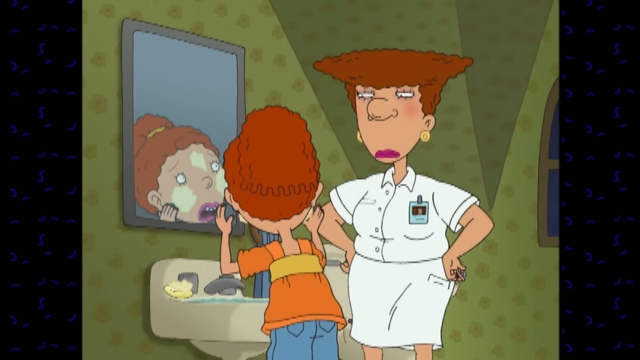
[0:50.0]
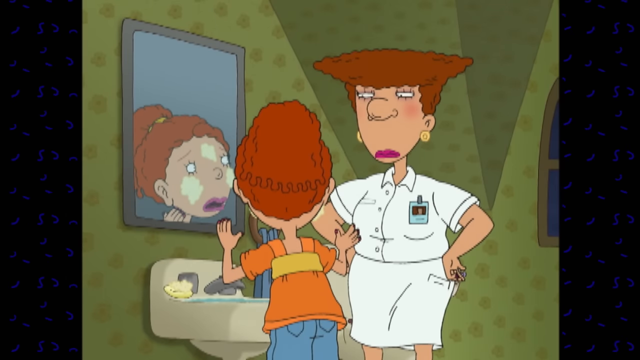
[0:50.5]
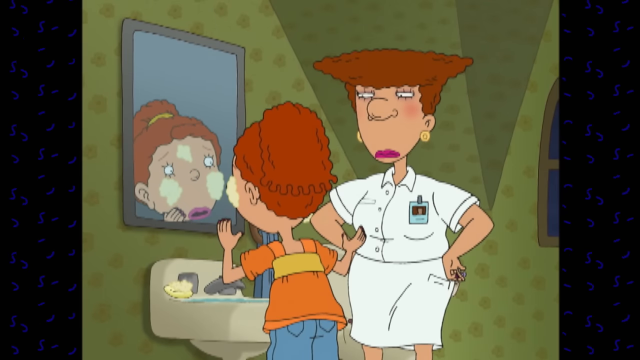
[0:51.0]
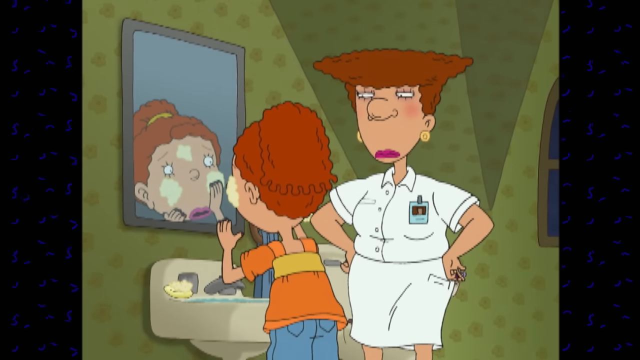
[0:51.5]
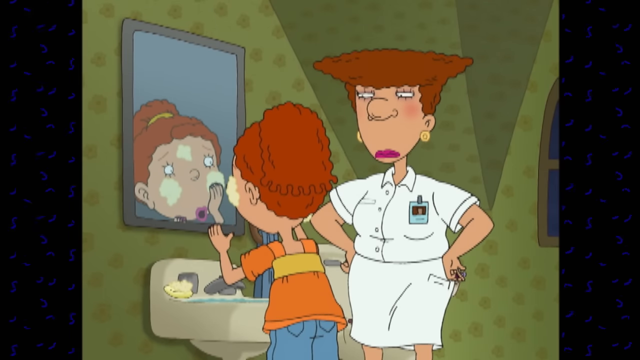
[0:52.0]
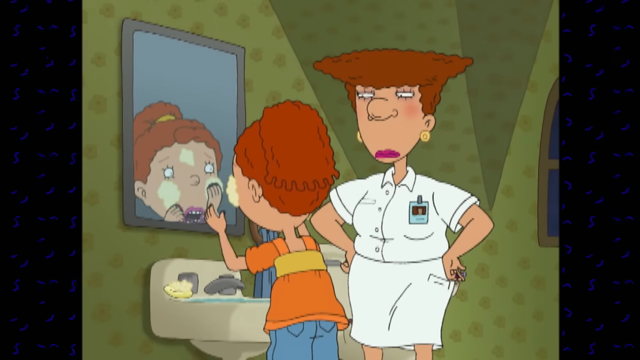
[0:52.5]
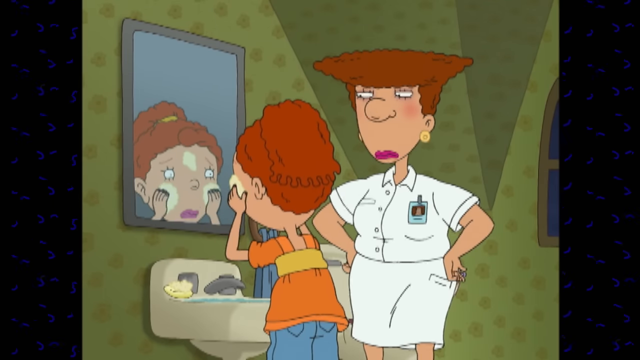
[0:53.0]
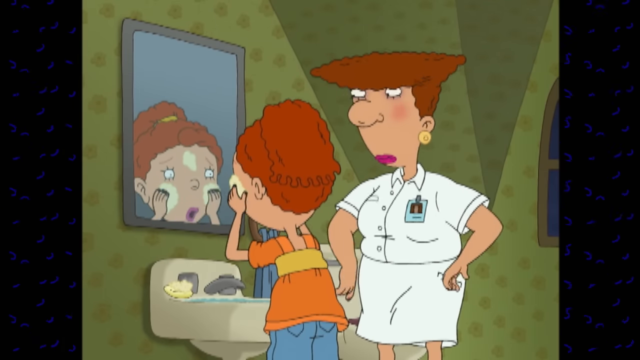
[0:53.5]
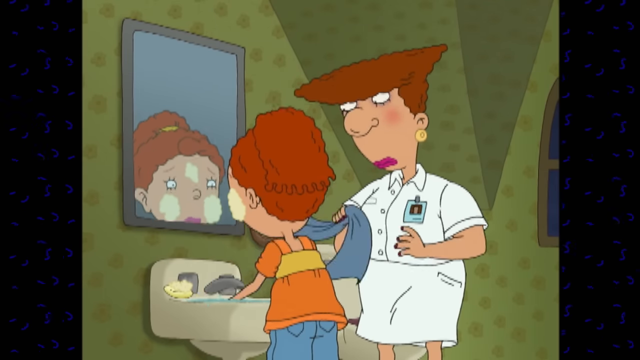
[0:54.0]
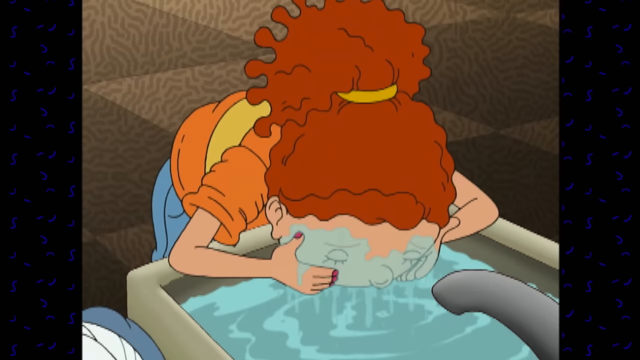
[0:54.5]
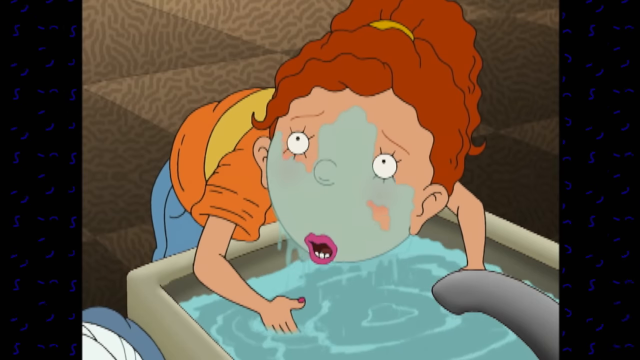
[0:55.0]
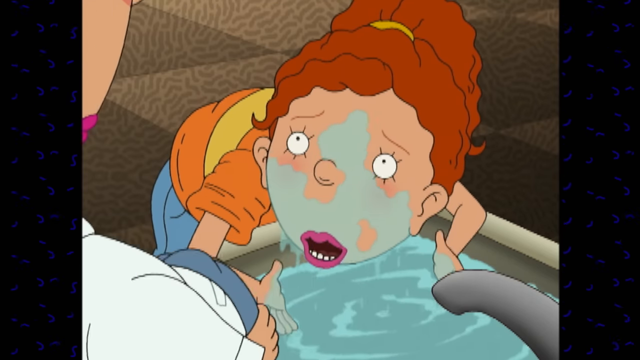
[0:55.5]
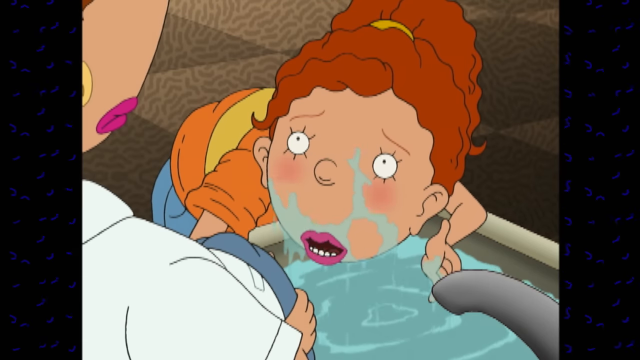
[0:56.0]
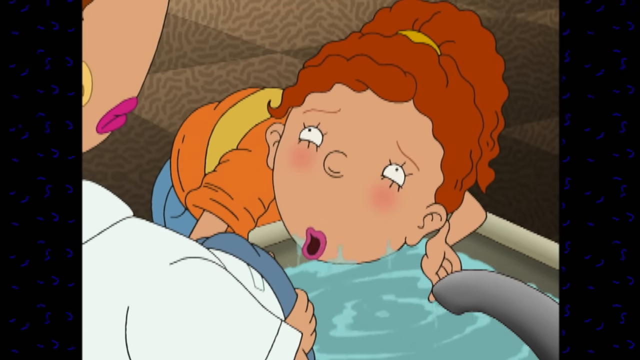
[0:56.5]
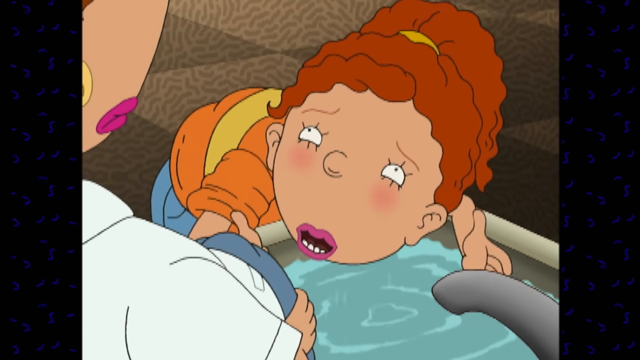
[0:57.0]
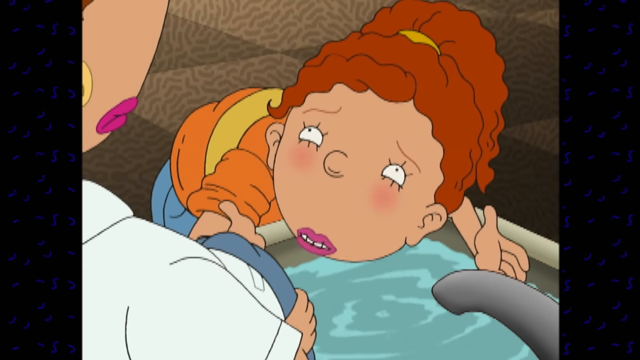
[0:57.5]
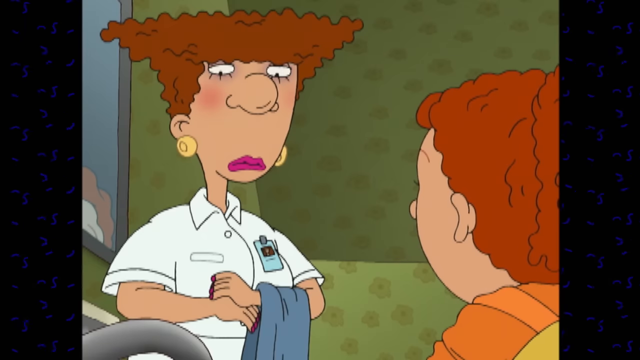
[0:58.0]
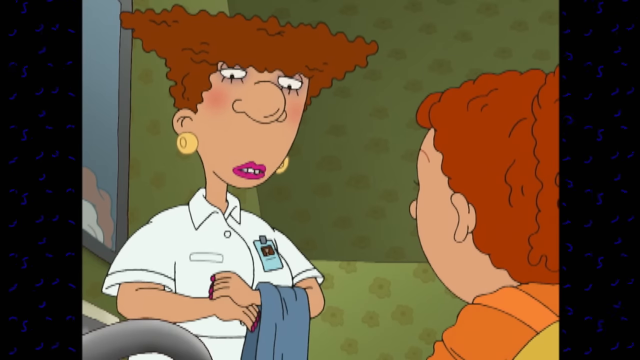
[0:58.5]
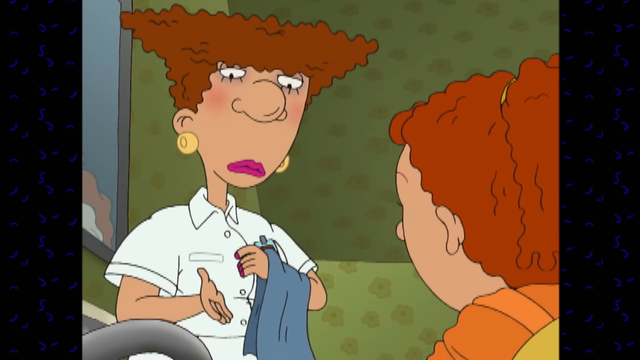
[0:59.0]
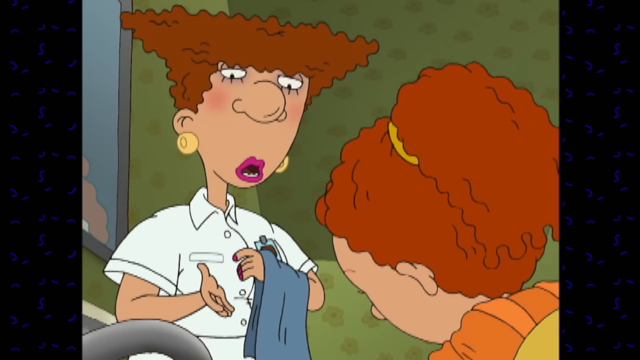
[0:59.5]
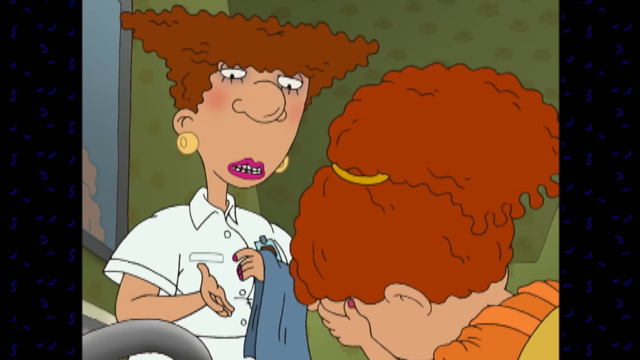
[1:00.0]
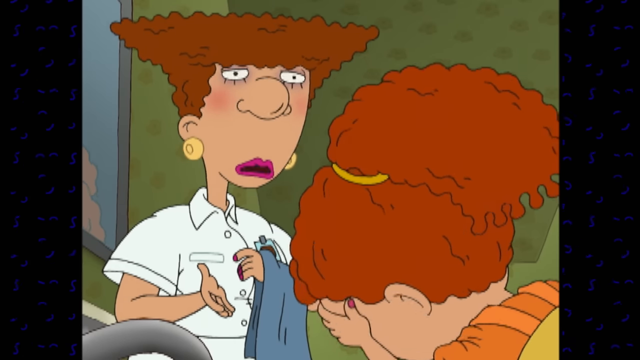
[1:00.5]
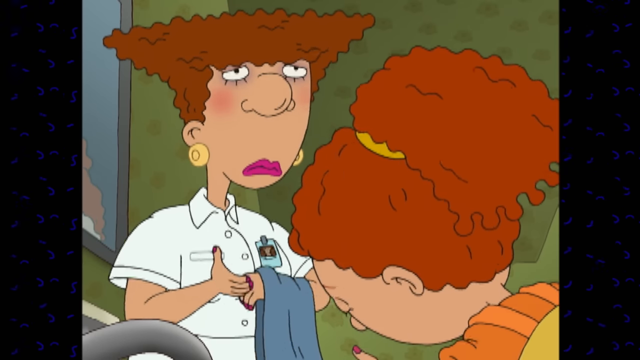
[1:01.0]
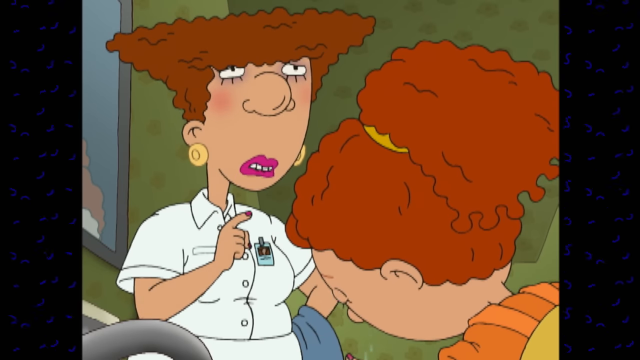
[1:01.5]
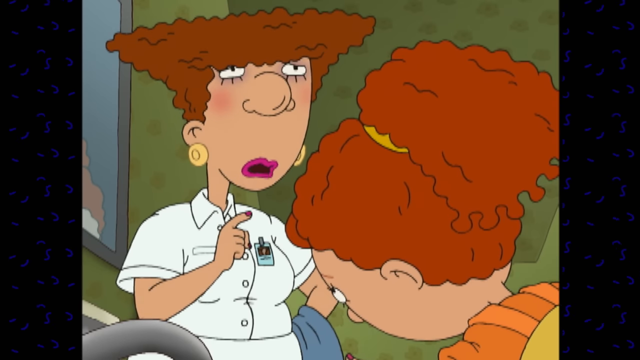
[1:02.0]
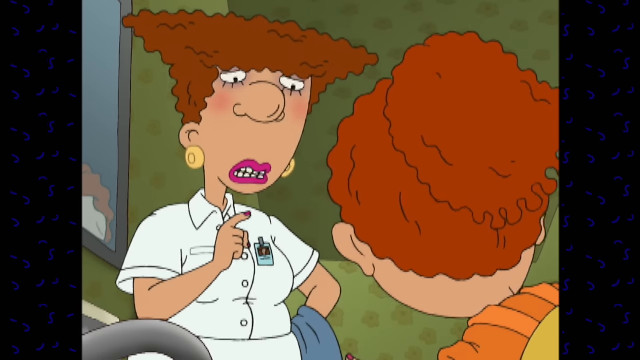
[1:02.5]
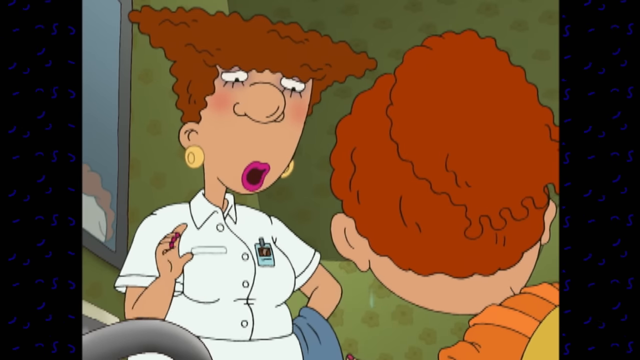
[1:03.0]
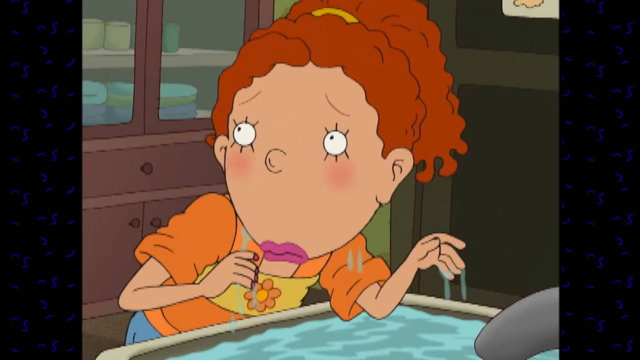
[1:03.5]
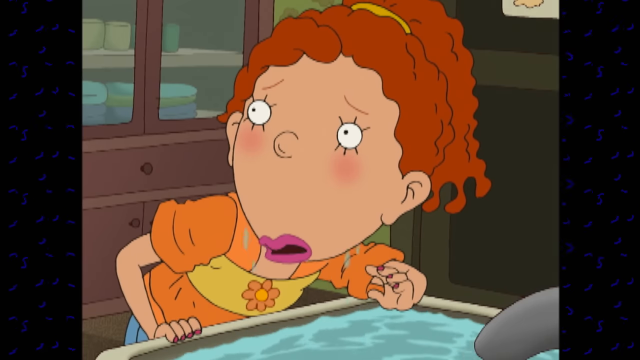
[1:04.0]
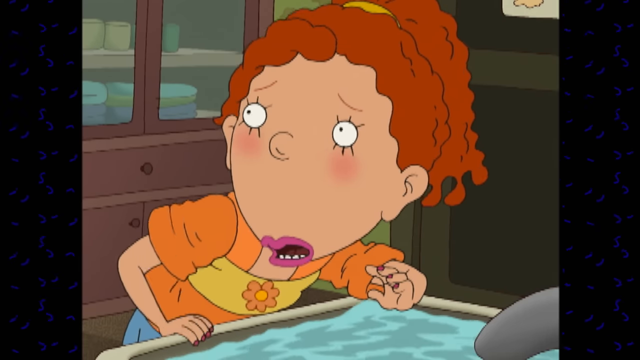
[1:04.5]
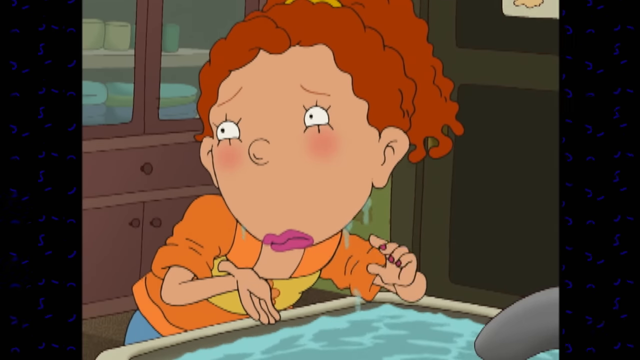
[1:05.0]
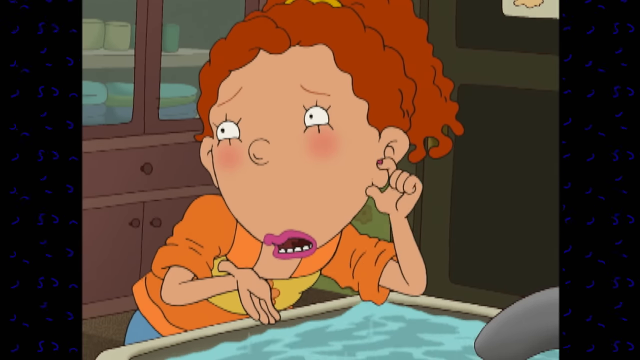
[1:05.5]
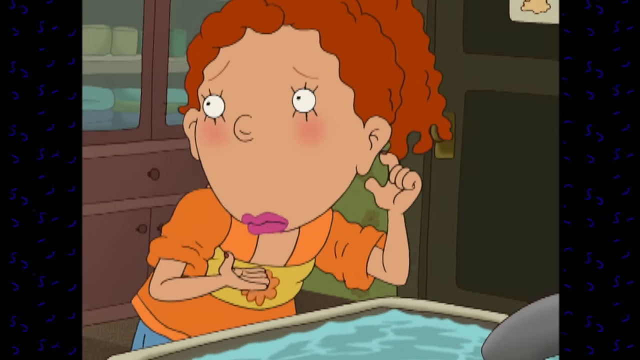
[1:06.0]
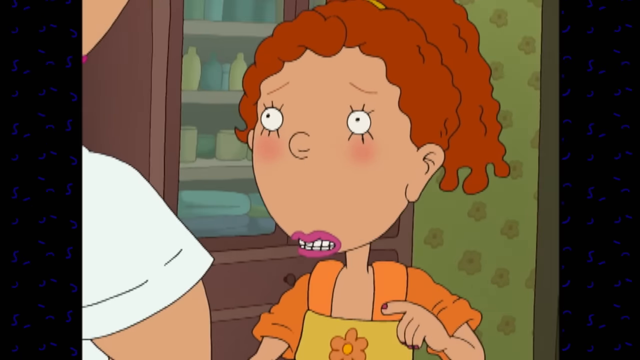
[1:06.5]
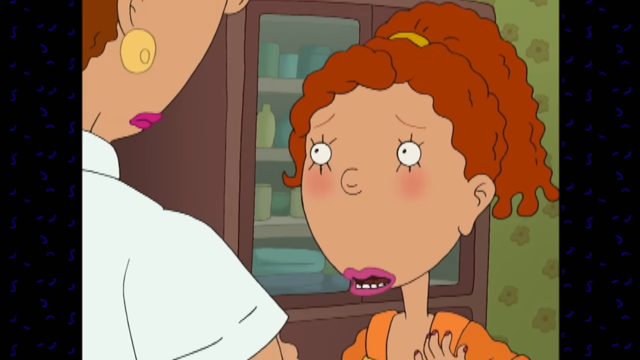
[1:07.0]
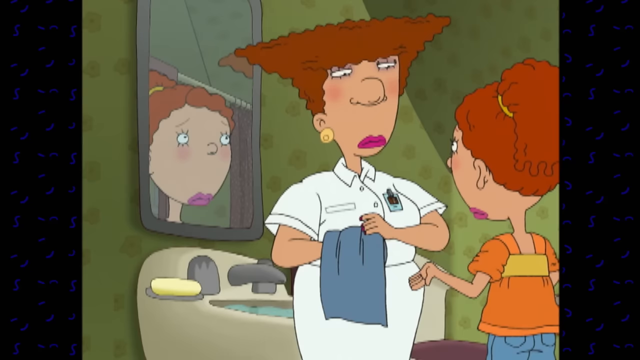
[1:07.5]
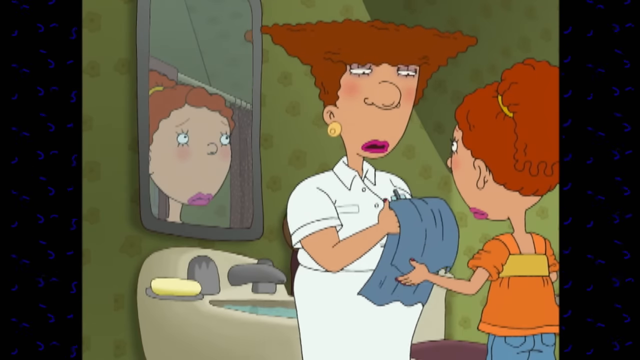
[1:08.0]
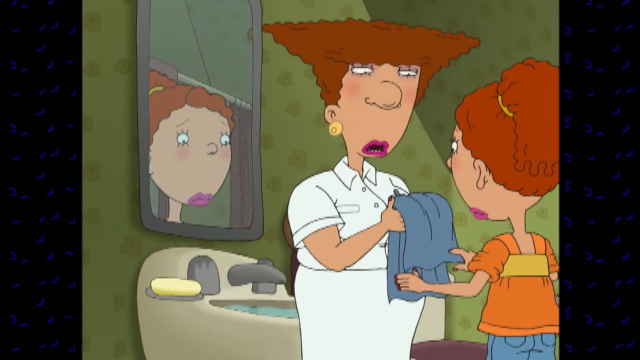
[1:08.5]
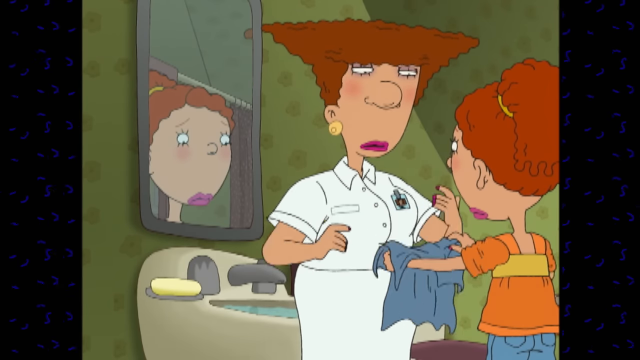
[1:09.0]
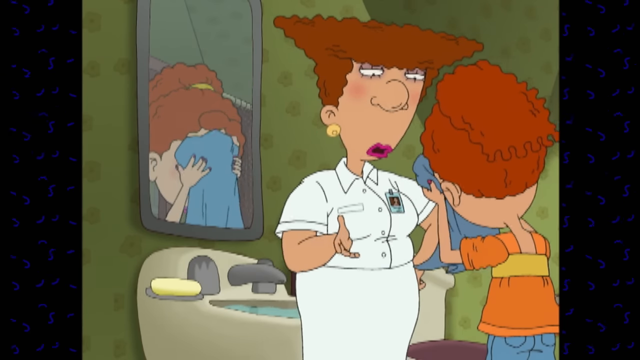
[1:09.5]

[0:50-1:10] The girl looks at the mirror in front of her and washes her face with water while the older lady watches her with her hands on her hips, seeing if she is doing everything right. The girl is still sad but does what she was told, rinsing the soap off her face with water. The older lady, the nurse, gives her a towel to dry her face and hands. The girl is still complaining about something and the lady is telling her something; neither of them is happy. The girl dries her face with the warm towel the lady gave her.